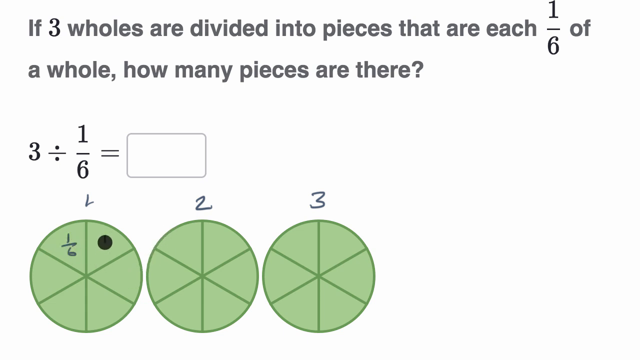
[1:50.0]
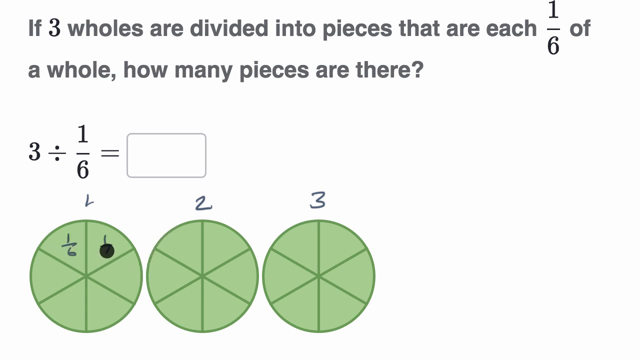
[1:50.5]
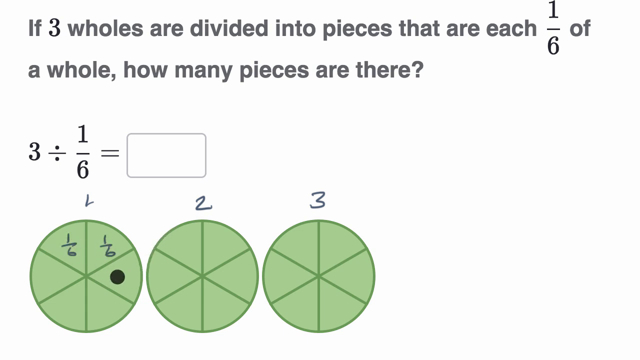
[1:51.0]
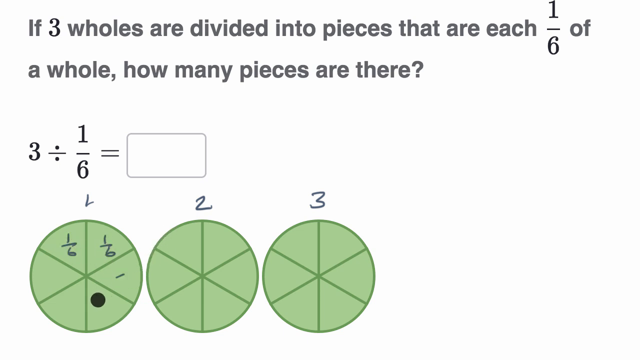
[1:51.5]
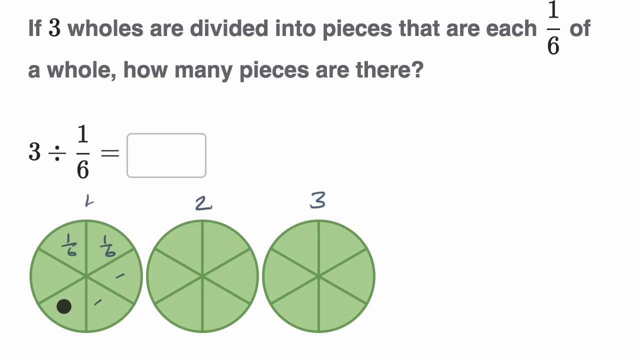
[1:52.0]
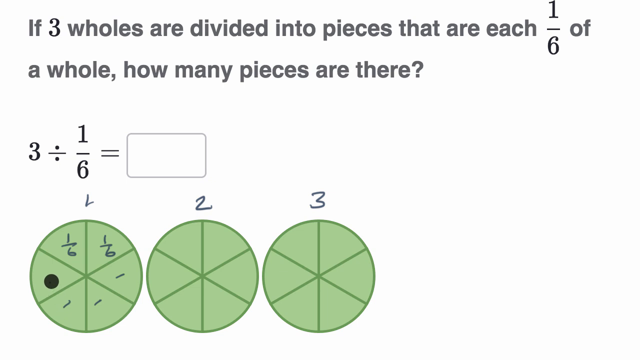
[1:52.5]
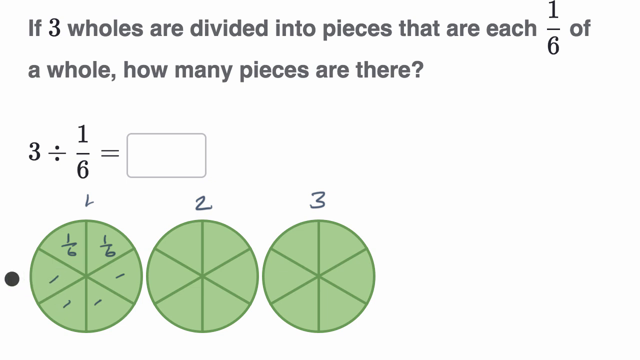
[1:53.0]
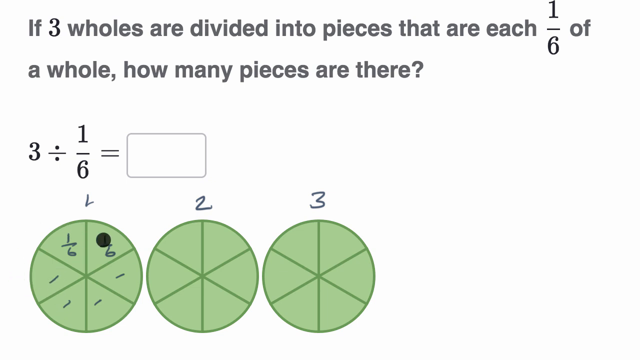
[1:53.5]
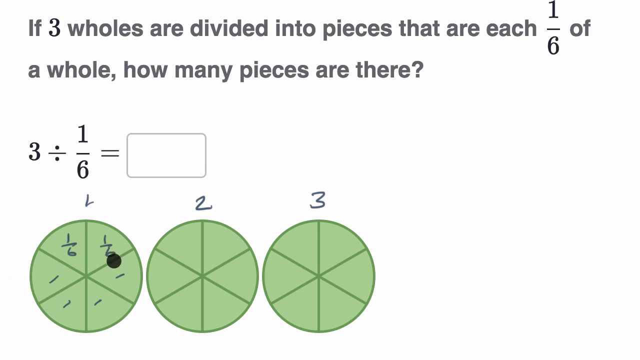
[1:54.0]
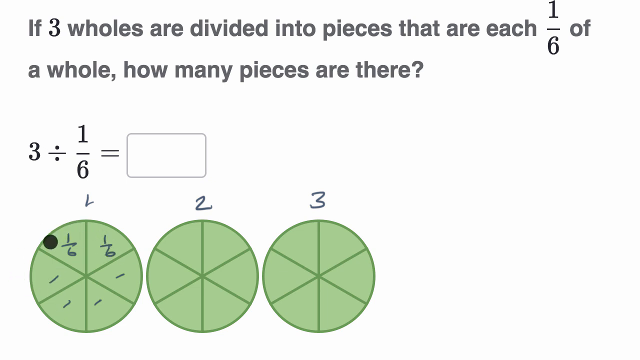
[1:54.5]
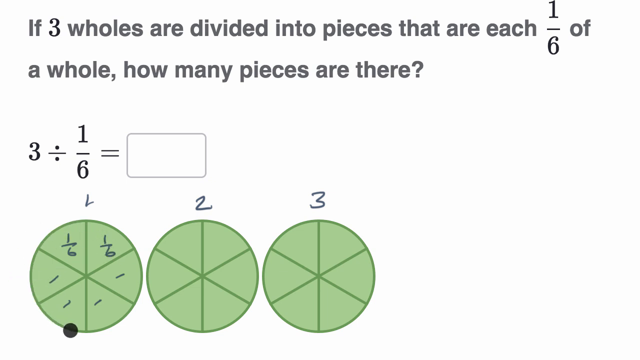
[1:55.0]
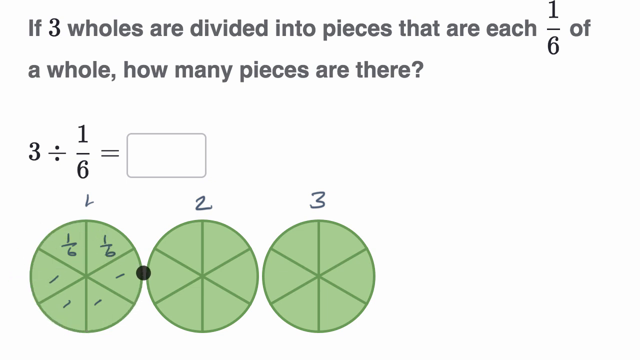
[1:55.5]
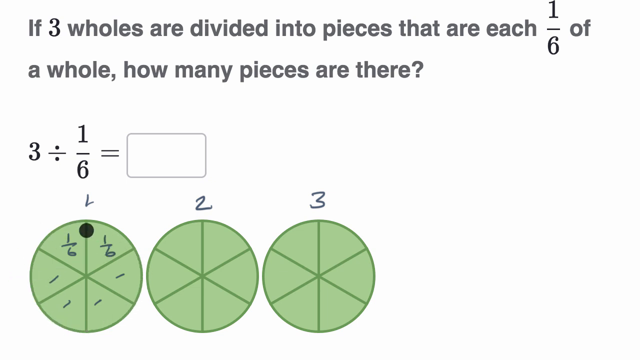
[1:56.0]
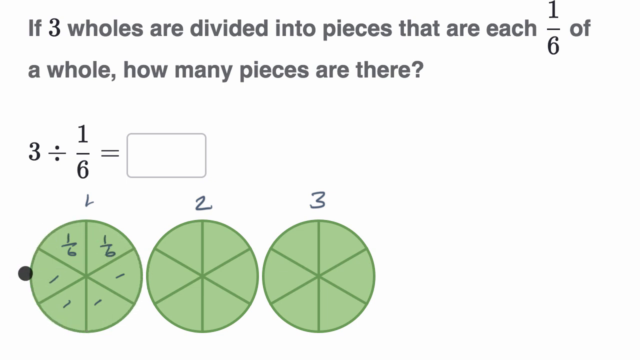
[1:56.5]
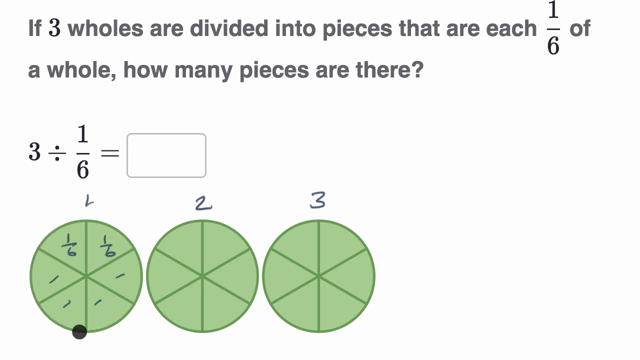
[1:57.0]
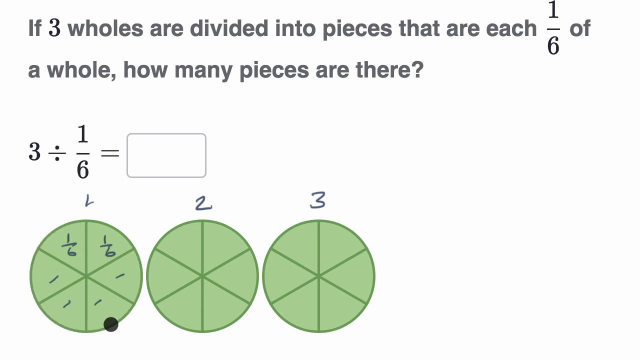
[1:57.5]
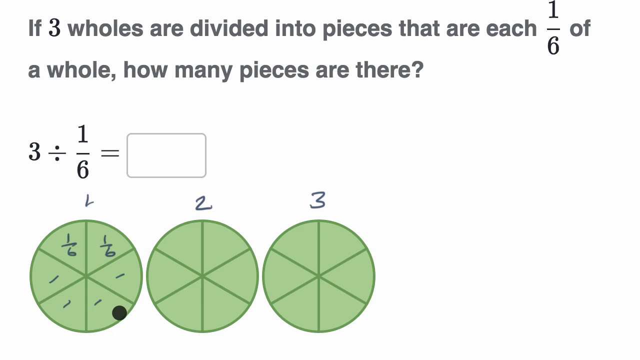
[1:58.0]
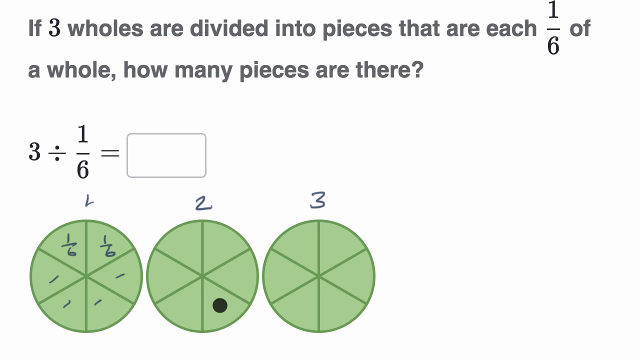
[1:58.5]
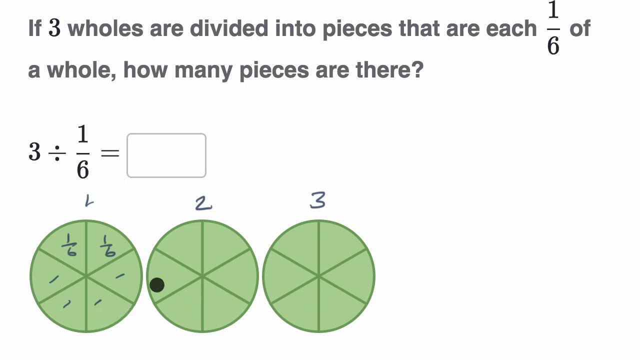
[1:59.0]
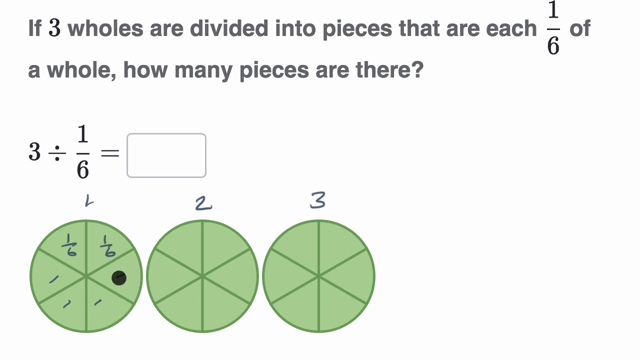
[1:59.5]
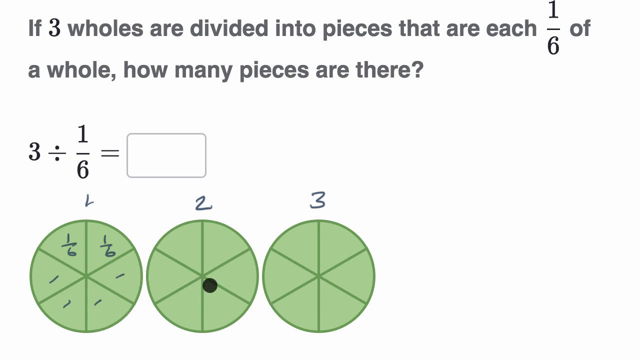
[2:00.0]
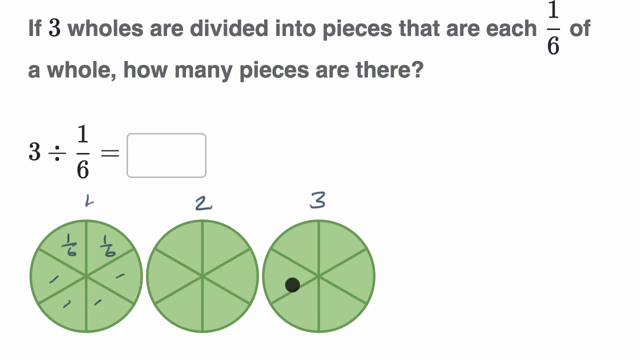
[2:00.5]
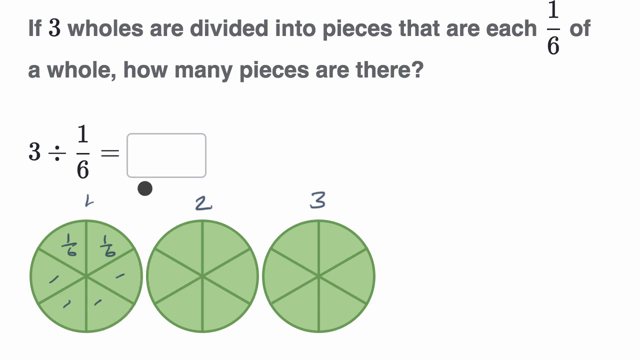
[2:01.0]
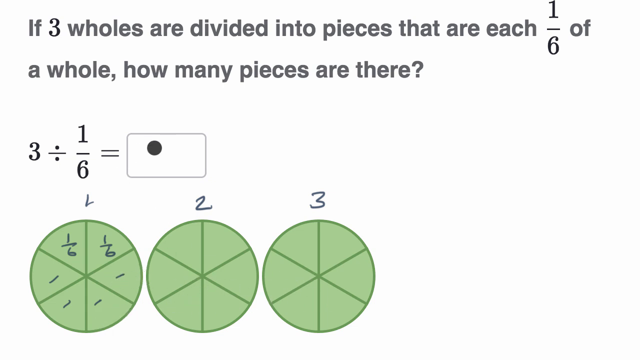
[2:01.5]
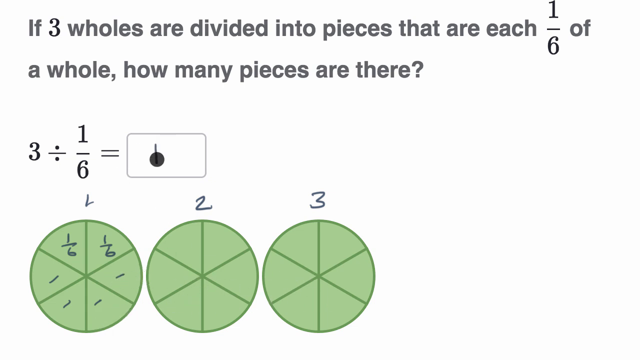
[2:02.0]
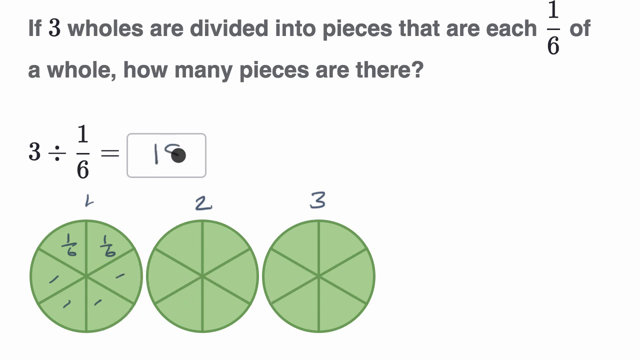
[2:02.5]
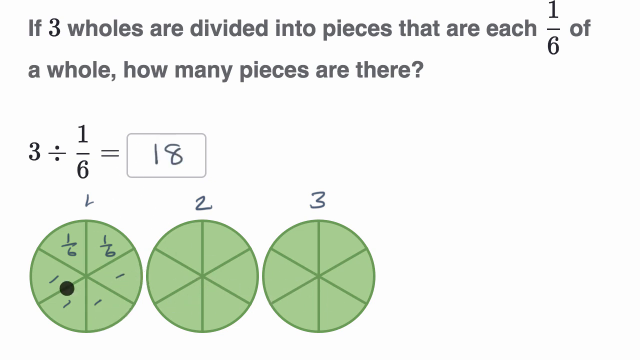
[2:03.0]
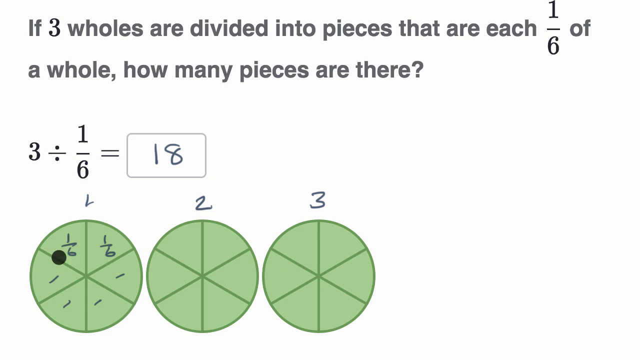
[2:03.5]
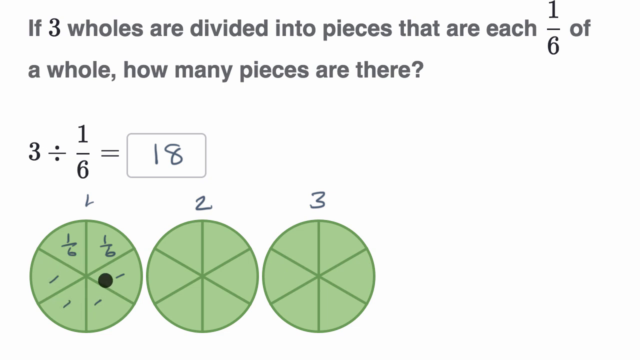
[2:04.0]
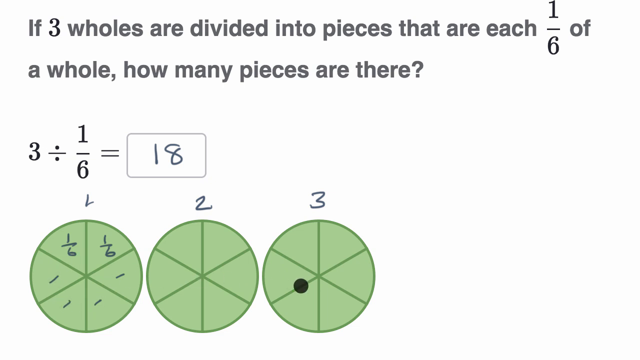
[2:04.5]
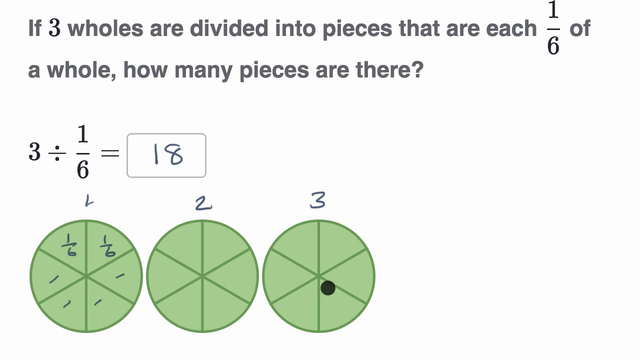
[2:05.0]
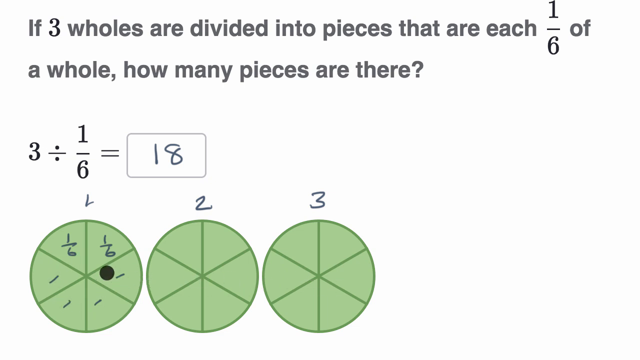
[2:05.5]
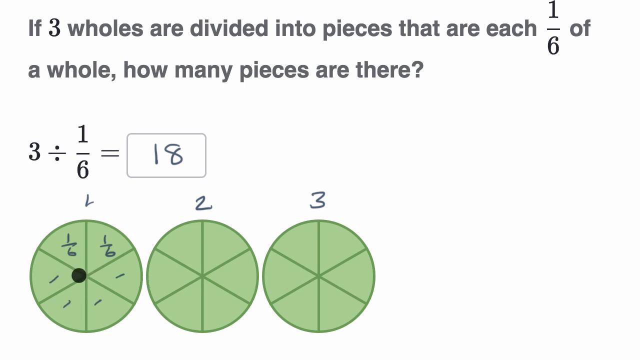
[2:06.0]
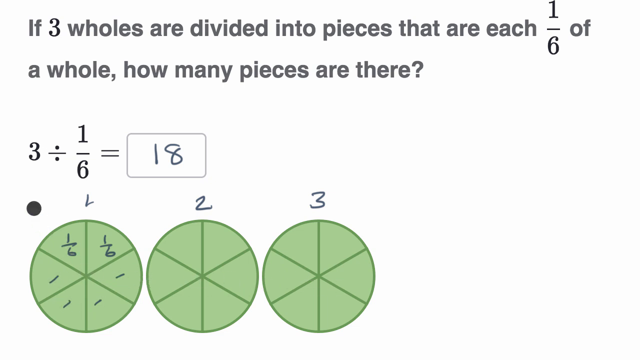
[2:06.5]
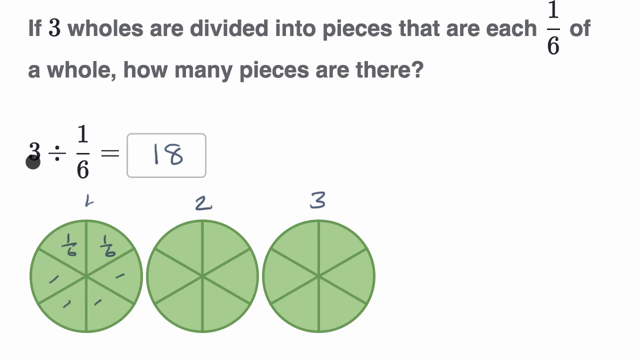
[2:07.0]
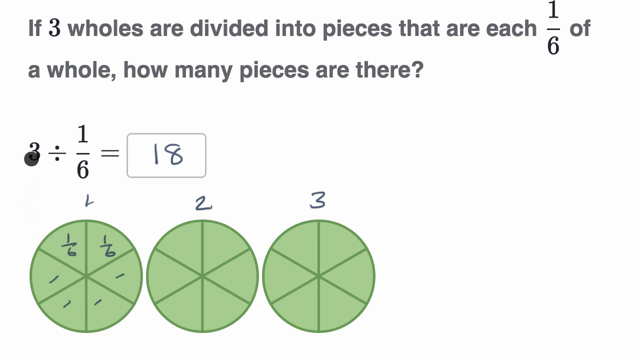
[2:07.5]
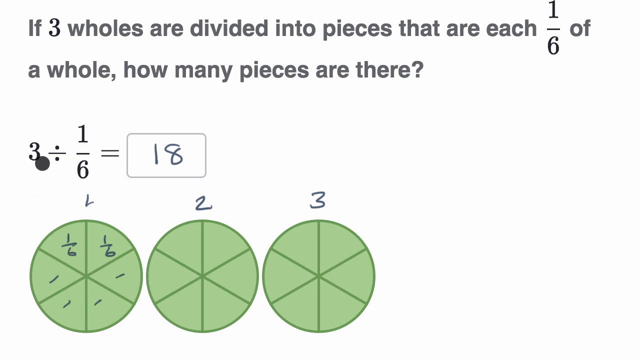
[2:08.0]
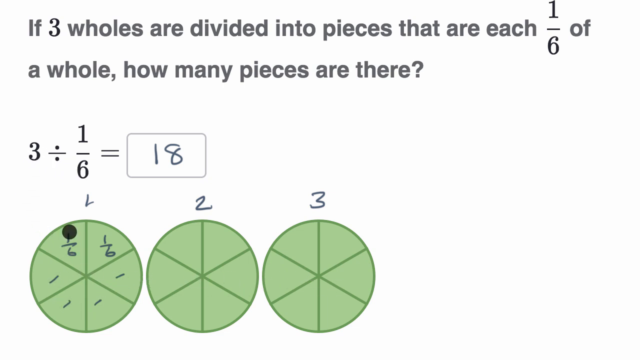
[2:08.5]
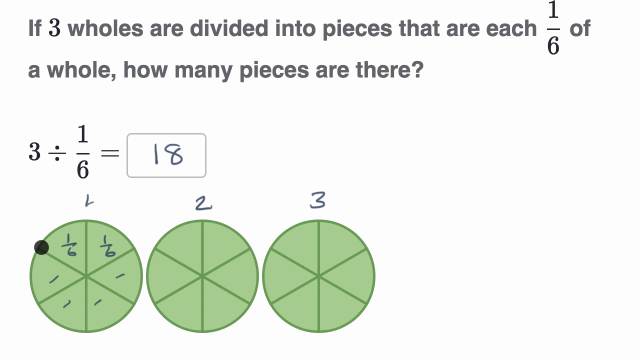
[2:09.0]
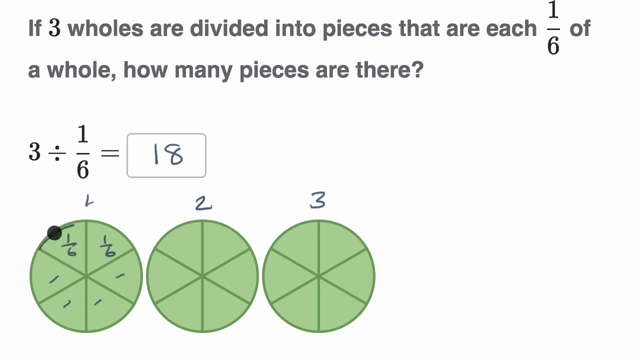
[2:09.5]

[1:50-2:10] On a white background are grey text at the top, an equation with an empty text entry box to its right in the middle, and three green circles divided into six sections at the bottom. The numbers 1, 2 and 3 are drawn over the leftmost, middle and rightmost green circles, and 1/6 is drawn in the upper left portion of the leftmost circle. The cursor hovers over the upper right portion of the leftmost circle, draws 1/6 there, and then draws short diagonal lines in the other four portions of that circle. It circles around the leftmost circle counterclockwise, moves right over the middle and rightmost circles, and is dragged up and to the left to hover over the empty text entry box, where it draws 18. The cursor is dragged down and to the left to the leftmost circle, moves right over the middle and rightmost circles, and is dragged up and to the left to hover over the 3 in the equation "3 ÷ by 1/6 =". It is then dragged down and to the left and begins to highlight the upper left portion of the leftmost green circle.